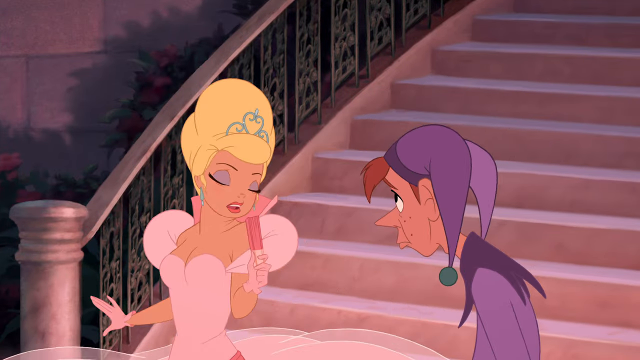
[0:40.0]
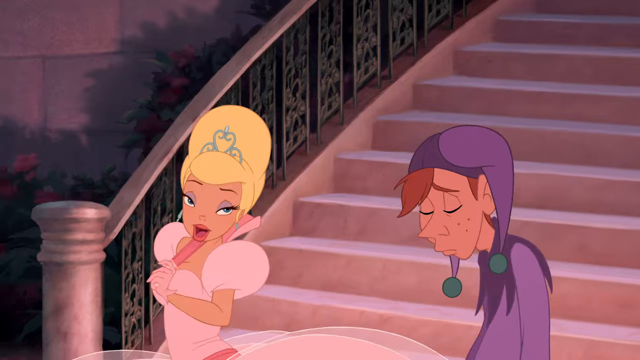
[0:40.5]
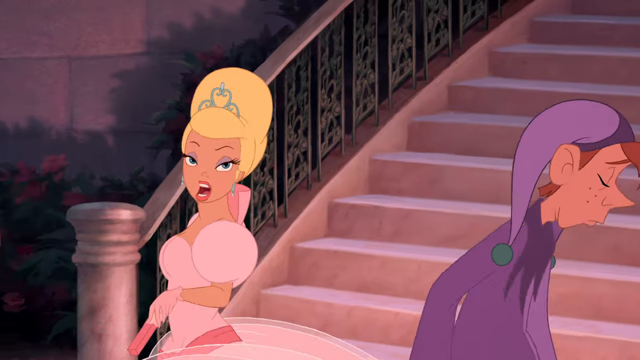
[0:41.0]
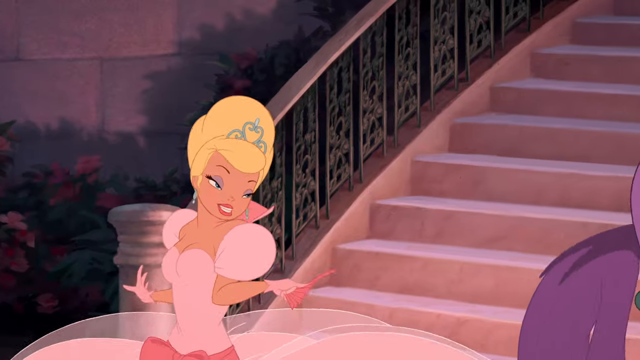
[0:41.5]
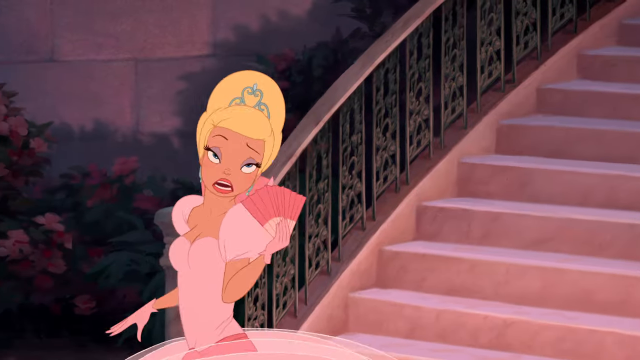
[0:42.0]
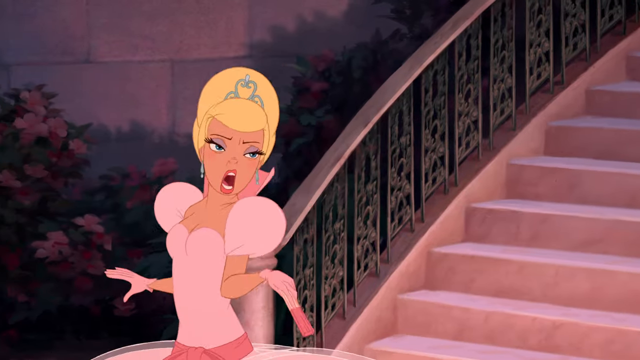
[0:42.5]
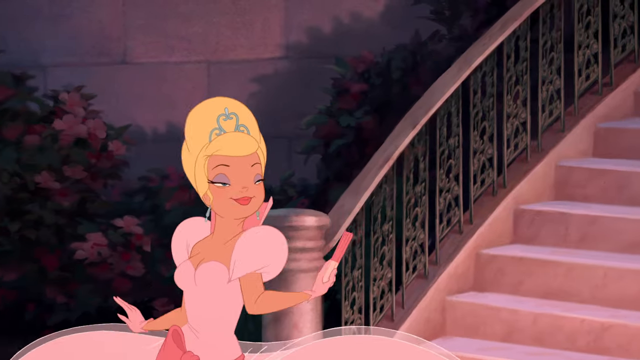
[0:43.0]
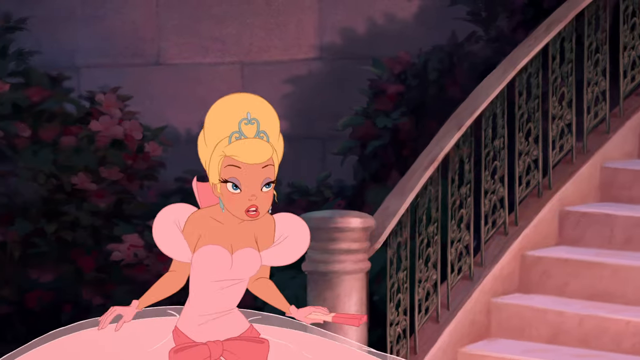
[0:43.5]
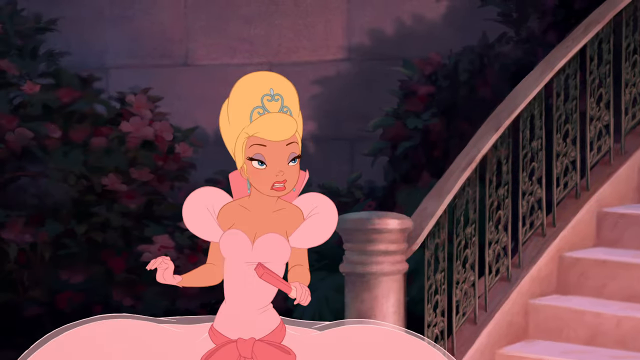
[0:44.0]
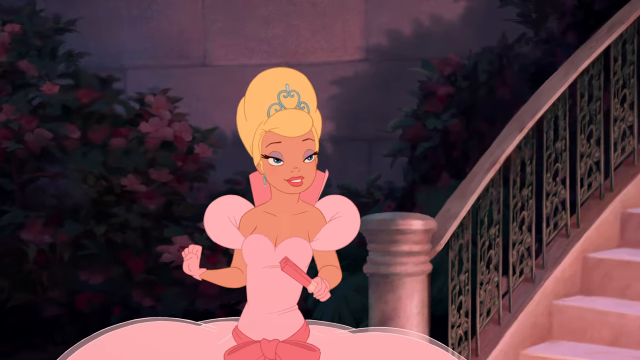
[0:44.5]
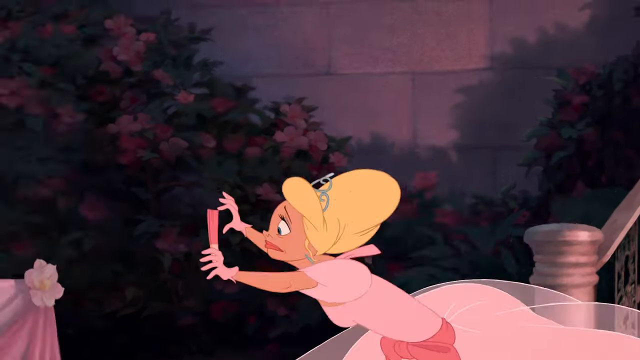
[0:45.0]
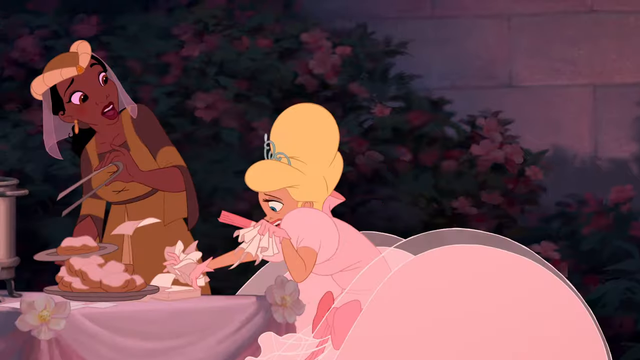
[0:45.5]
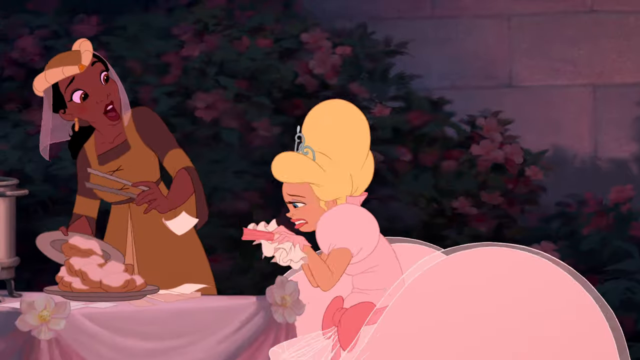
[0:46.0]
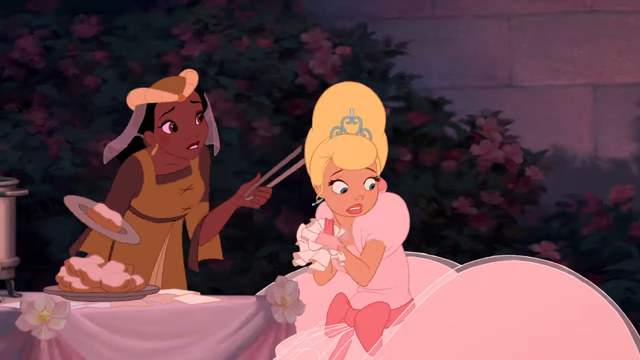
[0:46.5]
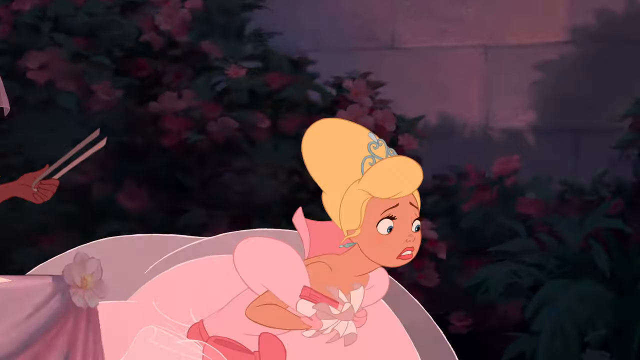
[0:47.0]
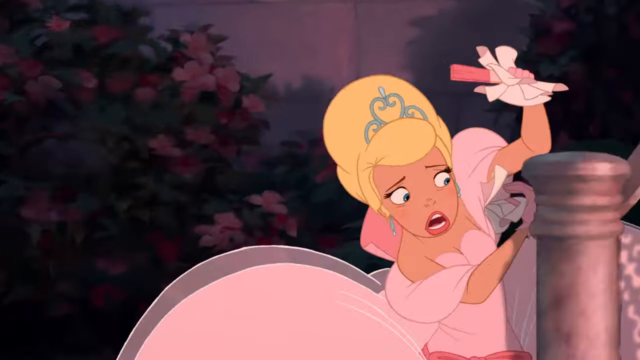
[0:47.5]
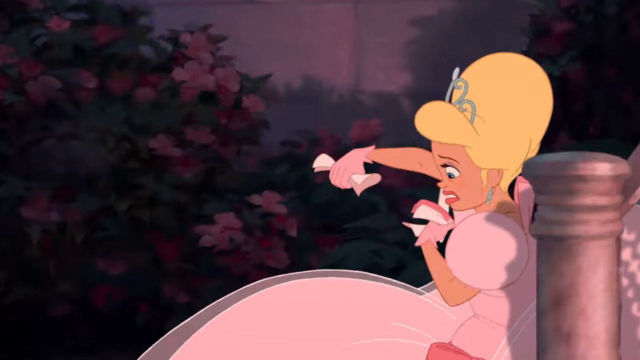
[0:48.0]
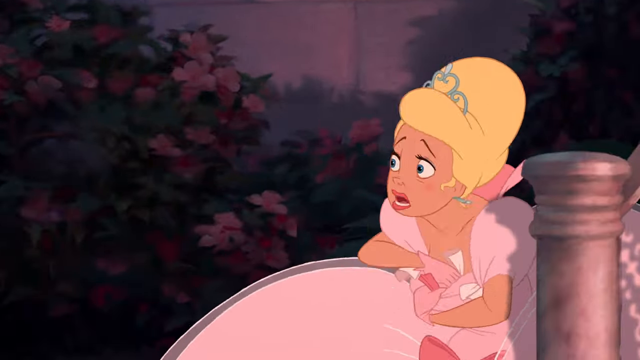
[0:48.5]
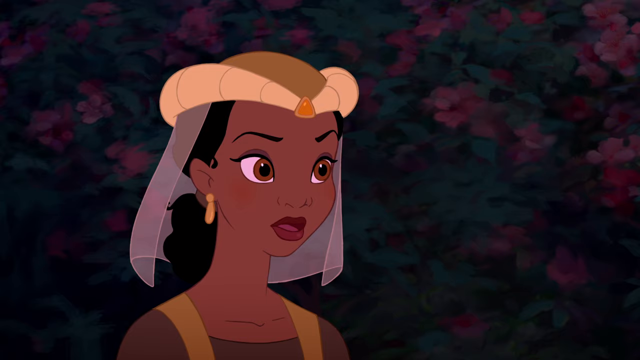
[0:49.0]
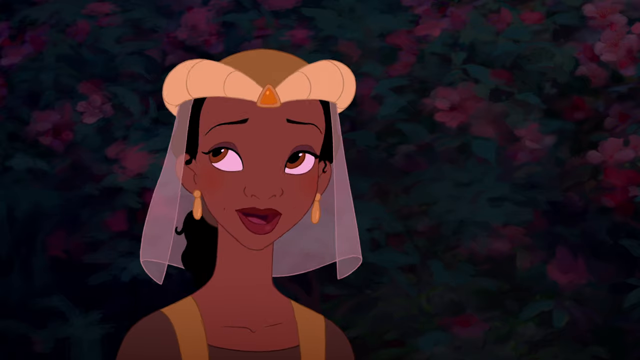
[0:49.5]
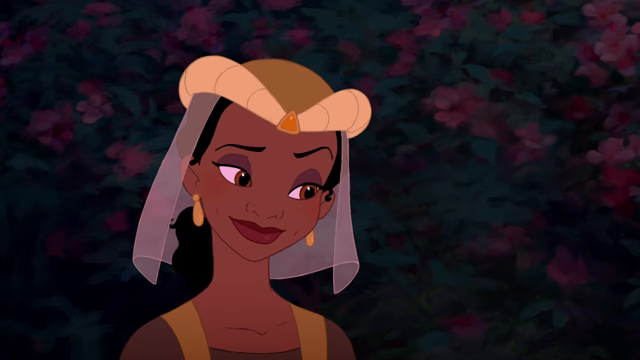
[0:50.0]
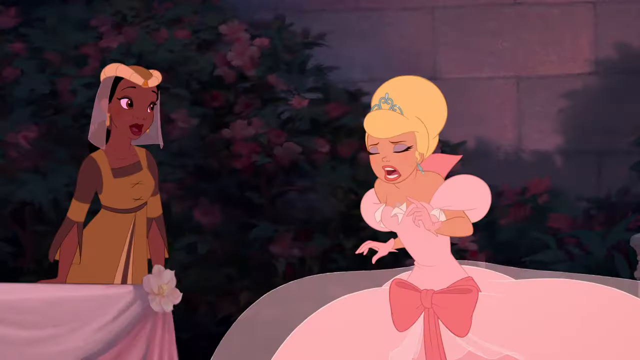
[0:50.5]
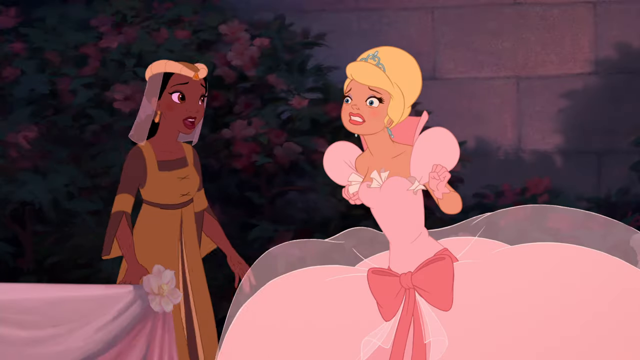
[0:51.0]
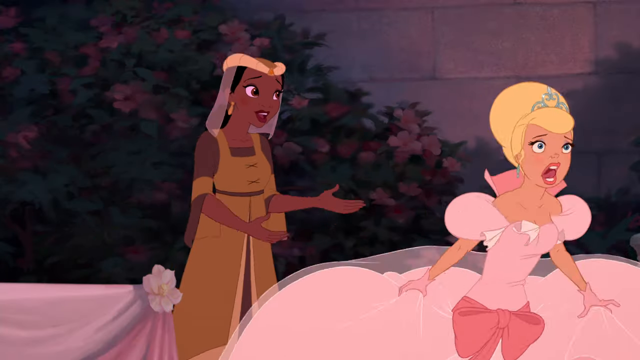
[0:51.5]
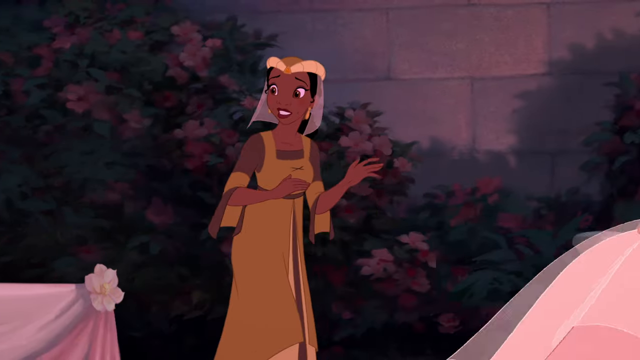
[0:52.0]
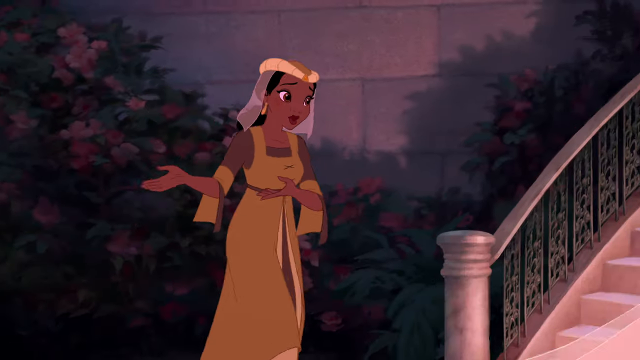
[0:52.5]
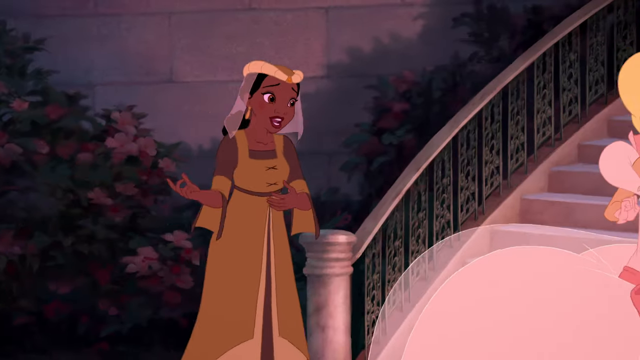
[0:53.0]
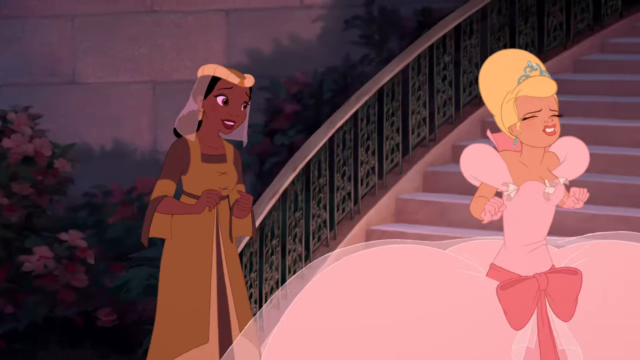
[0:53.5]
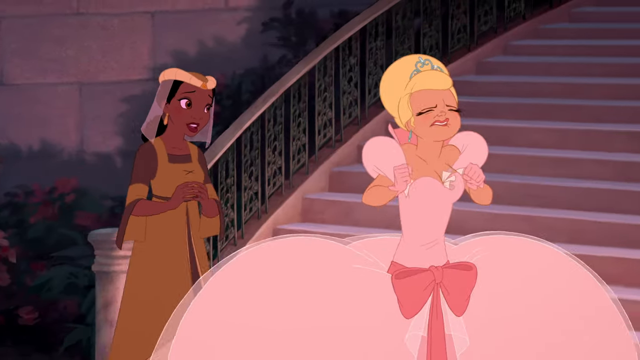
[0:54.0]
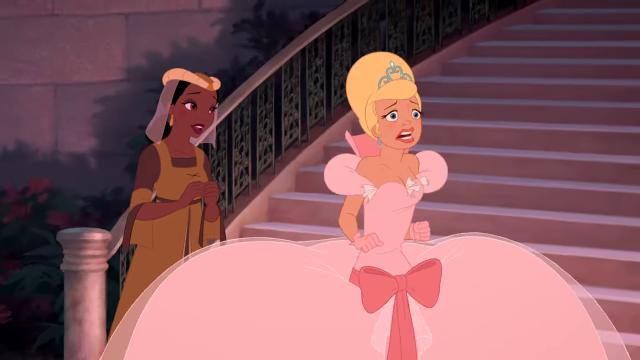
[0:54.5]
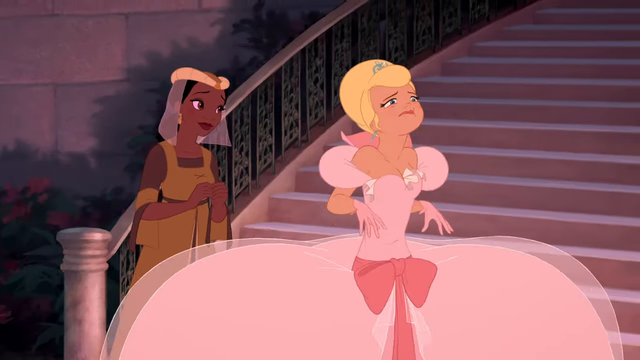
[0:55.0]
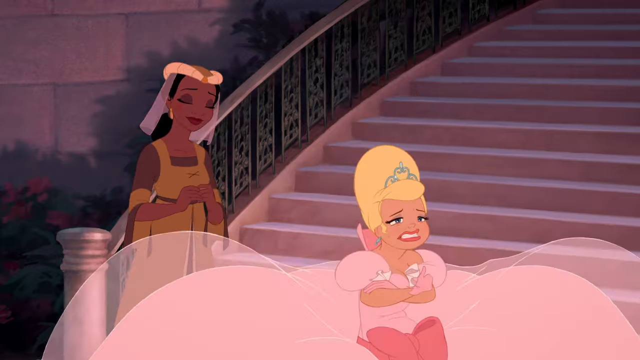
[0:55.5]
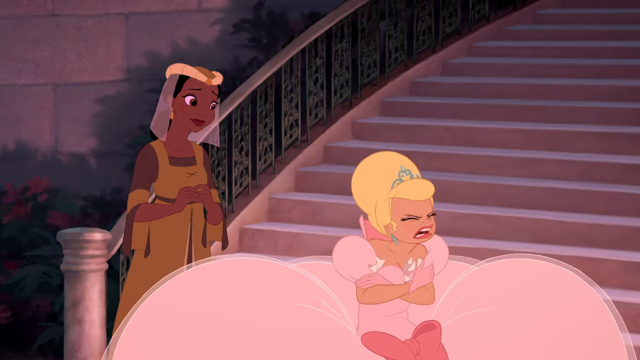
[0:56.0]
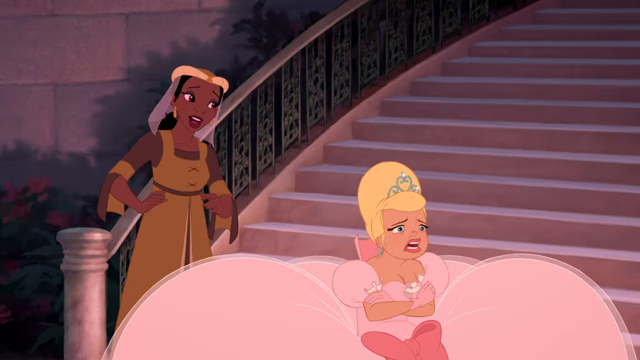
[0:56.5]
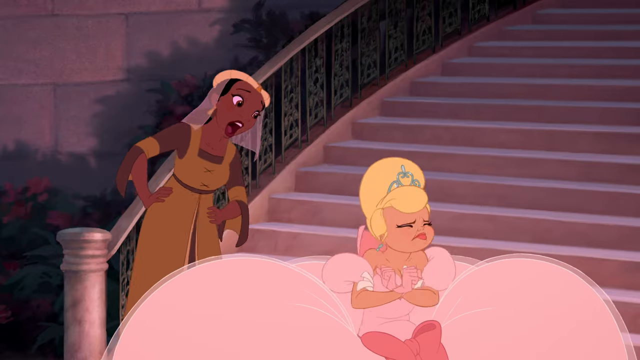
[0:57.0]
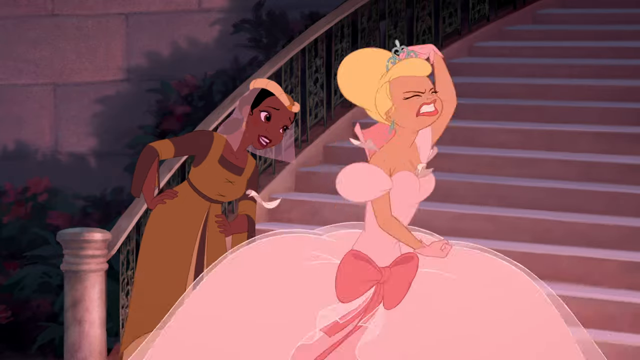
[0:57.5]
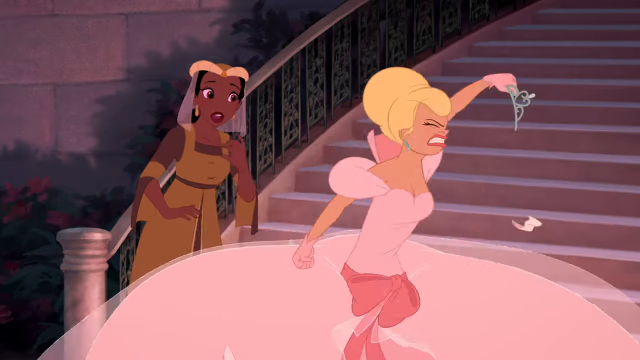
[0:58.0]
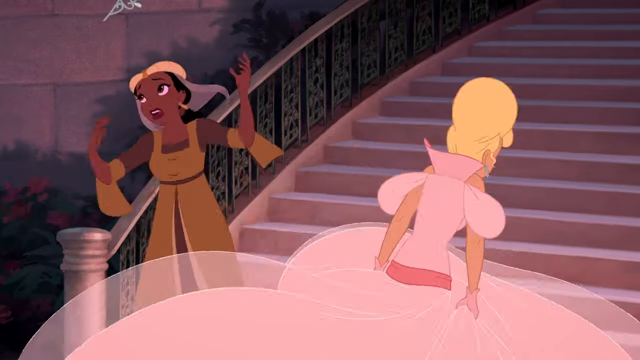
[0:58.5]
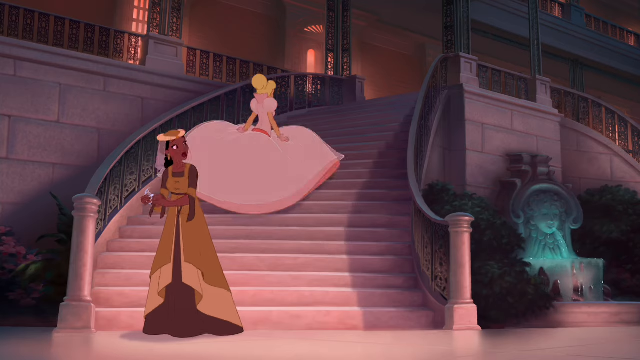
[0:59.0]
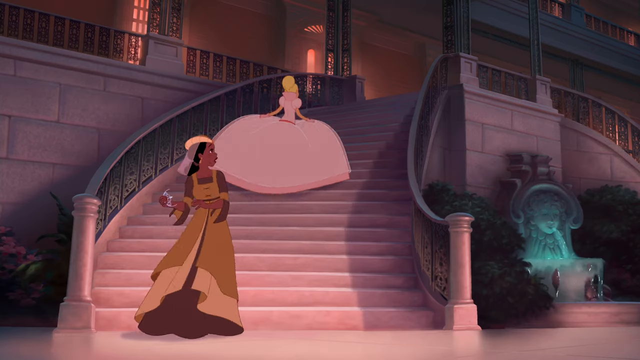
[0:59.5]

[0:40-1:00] In this animated short, a woman with a beautiful face and a blonde updo with a small tiara, wearing a pink ball gown, speaks to a man in a purple jester's costume as they stand on the stairs. The jester has his head dipped down, then turns away sadly and walks off the right side of the screen, while the woman opens her pink fan, smiles a little, fans herself and walks off to the left of the screen, seemingly still speaking to him. The woman arrives at the snack table and very quickly starts grabbing a bunch of napkins from it, which leaves the snack worker a little alarmed. With the napkins in her hands, the woman quickly turns back to the right and ducks down to hide beneath the staircase, where she starts shoving the tissues into the top of her dress around her chest. The snack worker steps away from behind the counter and calmly walks over to the right of the screen to speak to her. The woman in the ball gown is clearly upset: her hands are balled into fists, she shakes her arms up and down, her eyelids are droopy and her face looks upset. She sits down on the bottom of the stairs while the snack woman, who has dark hair and a brown dress, calmly watches over her. Then the woman in the ball gown quickly stands up and tosses something to the snack worker as she rushes up the stairs.